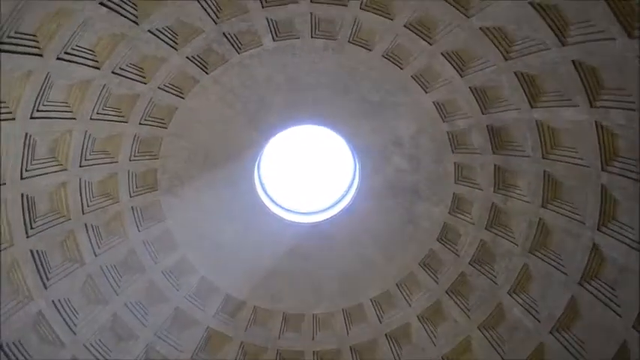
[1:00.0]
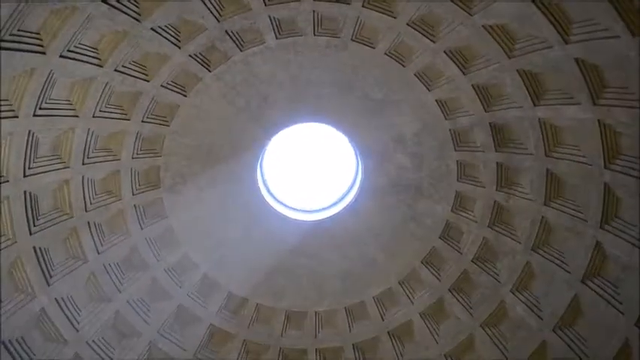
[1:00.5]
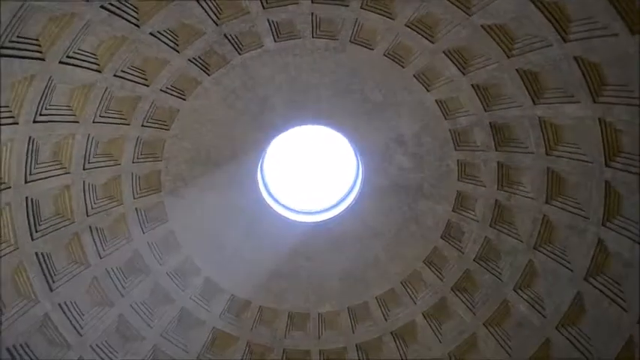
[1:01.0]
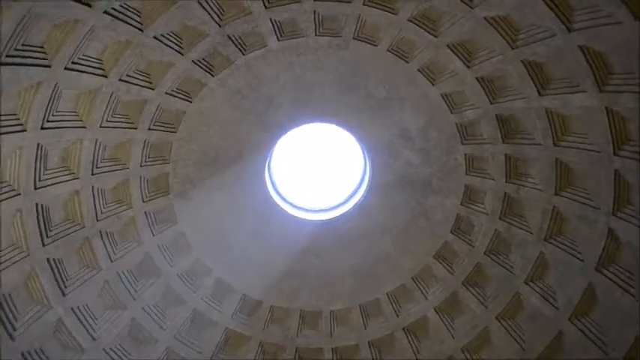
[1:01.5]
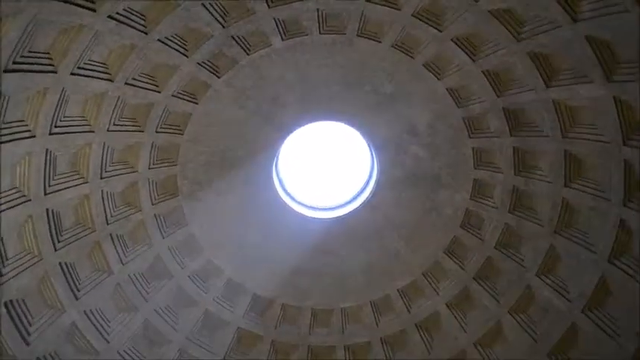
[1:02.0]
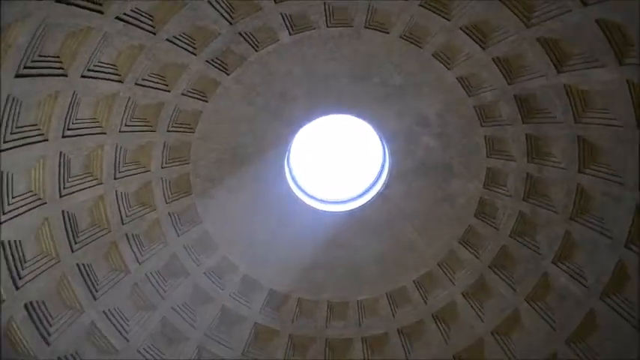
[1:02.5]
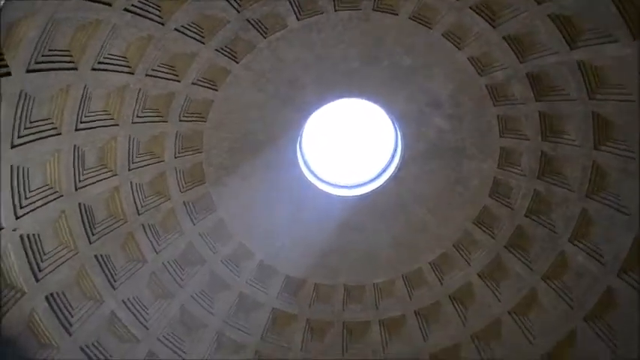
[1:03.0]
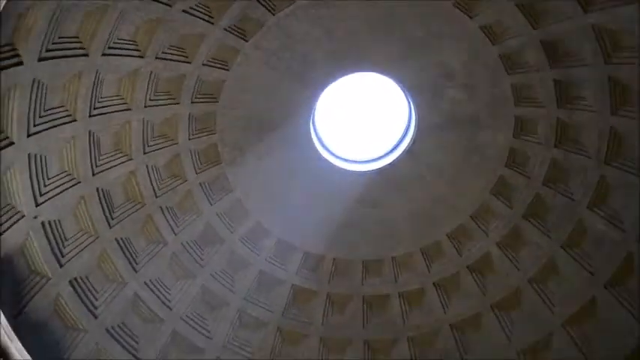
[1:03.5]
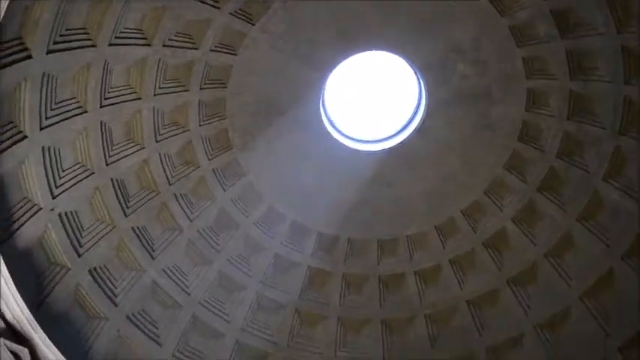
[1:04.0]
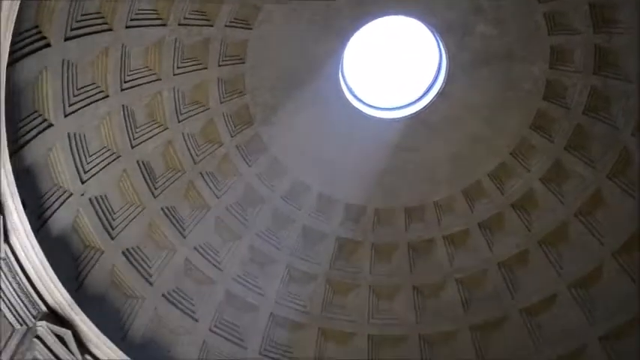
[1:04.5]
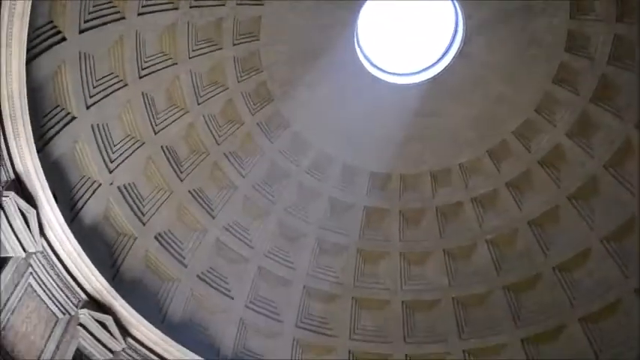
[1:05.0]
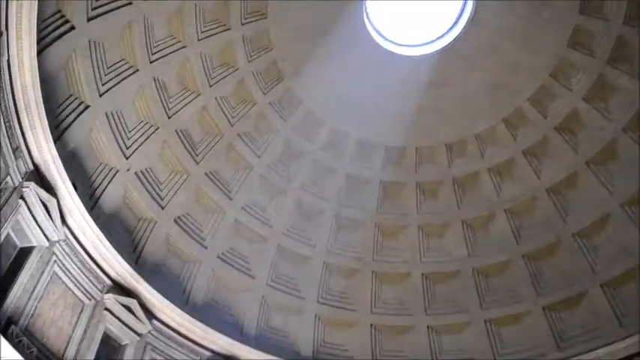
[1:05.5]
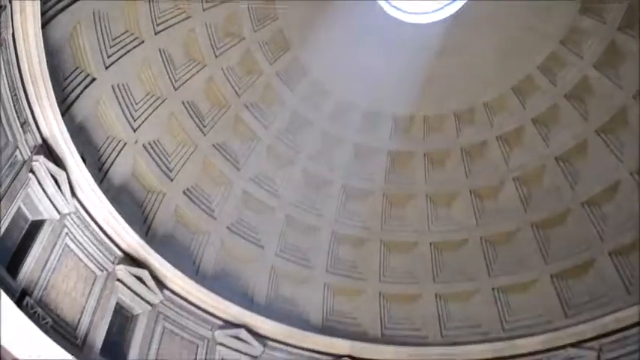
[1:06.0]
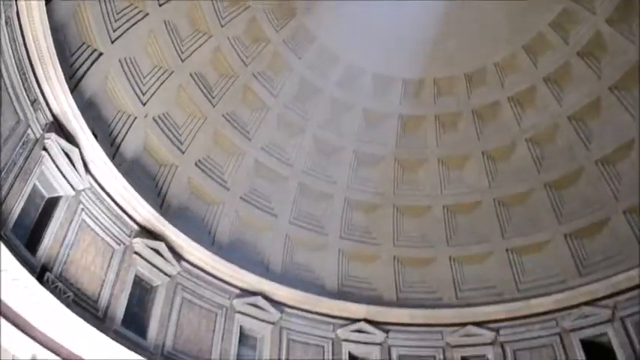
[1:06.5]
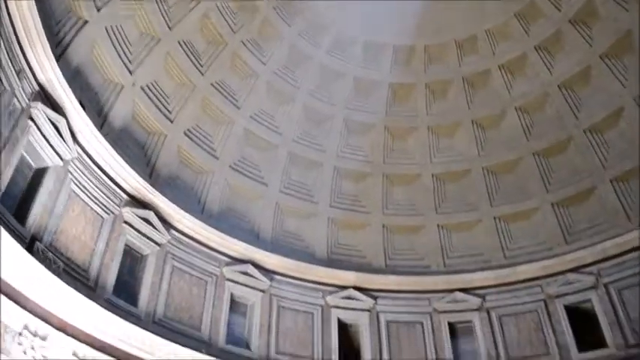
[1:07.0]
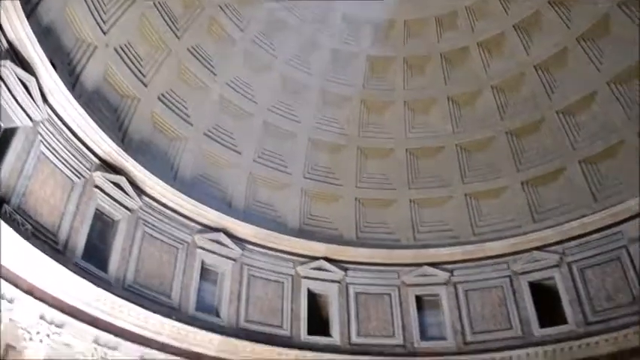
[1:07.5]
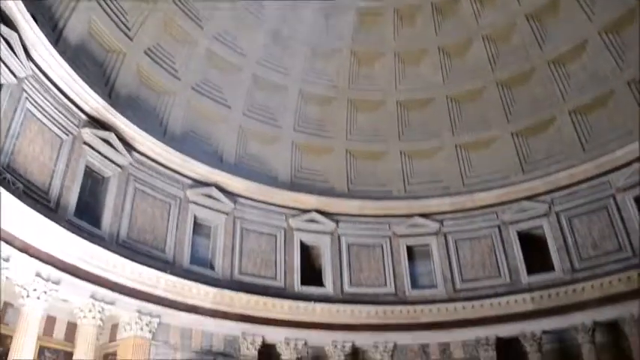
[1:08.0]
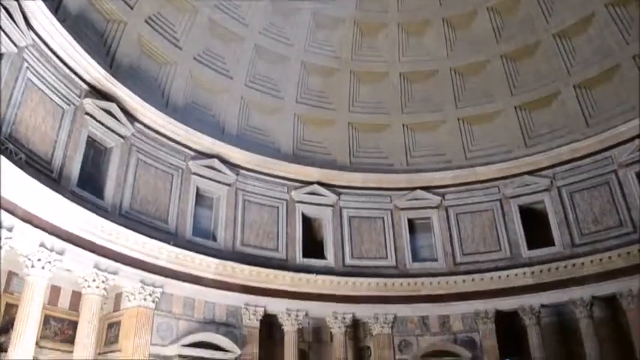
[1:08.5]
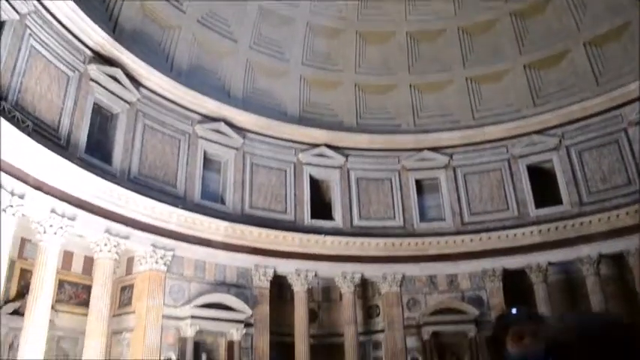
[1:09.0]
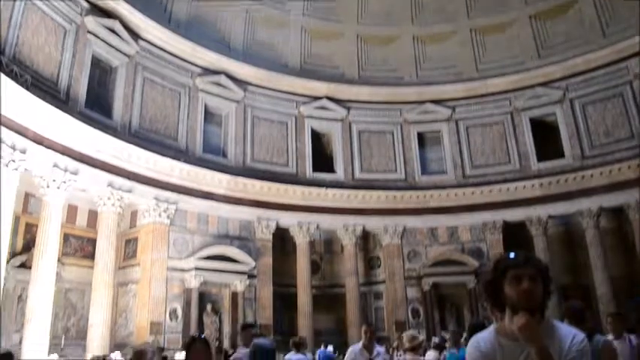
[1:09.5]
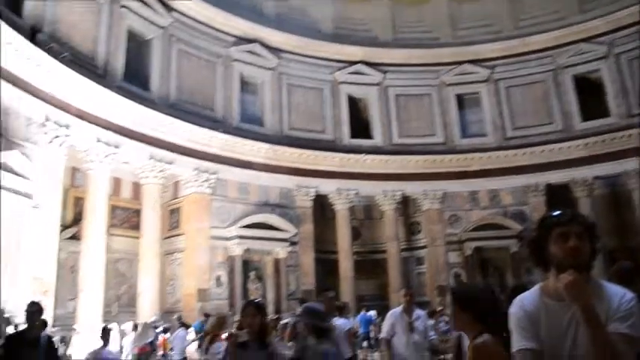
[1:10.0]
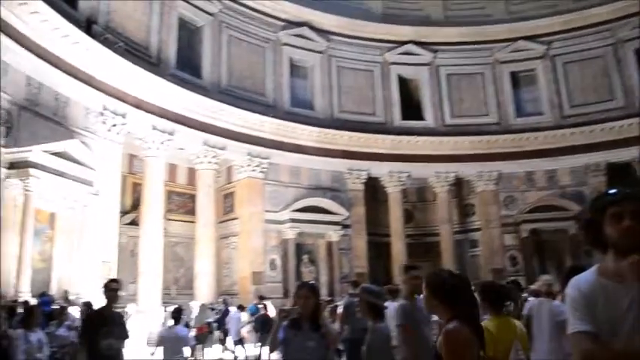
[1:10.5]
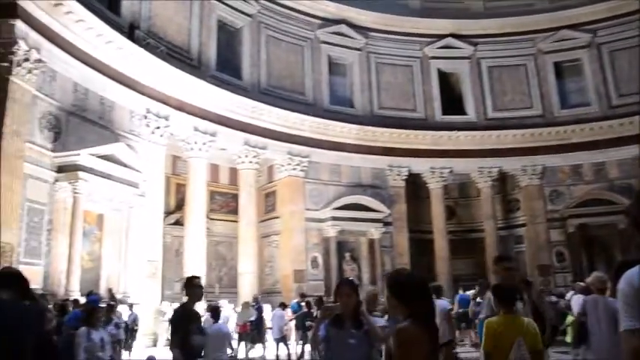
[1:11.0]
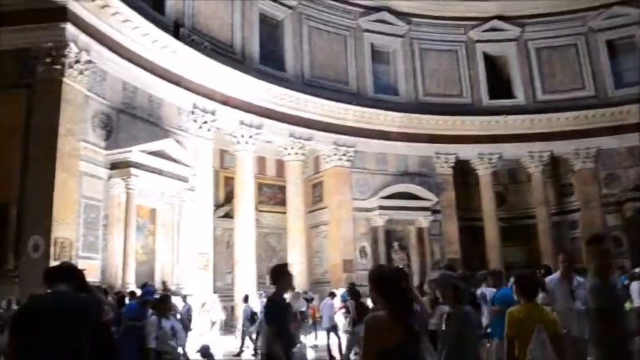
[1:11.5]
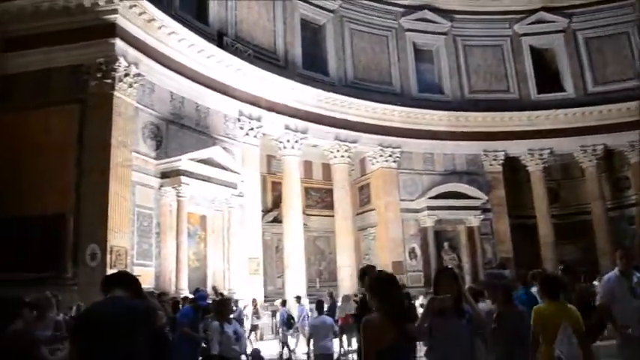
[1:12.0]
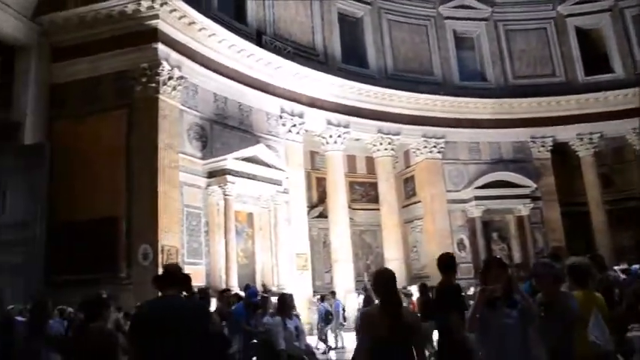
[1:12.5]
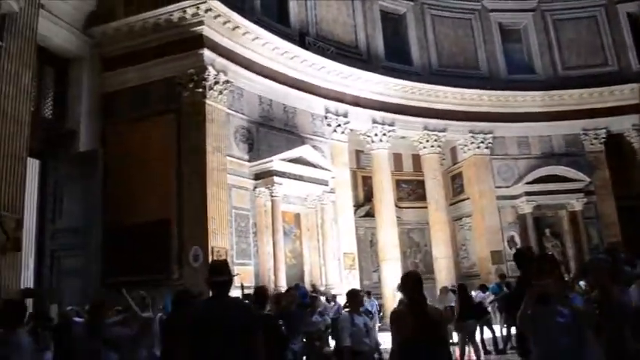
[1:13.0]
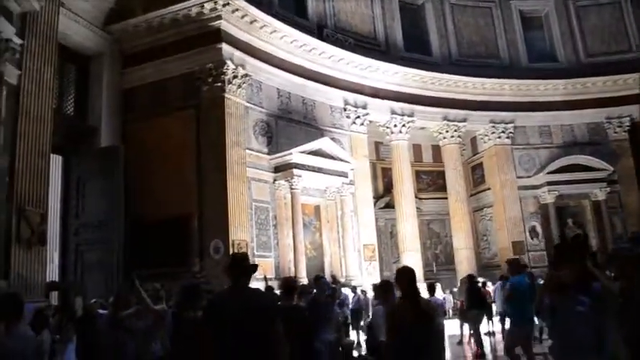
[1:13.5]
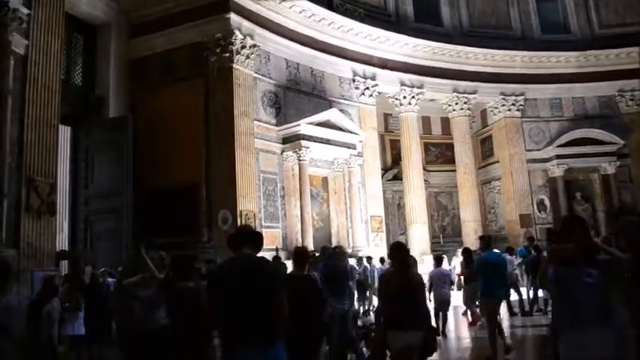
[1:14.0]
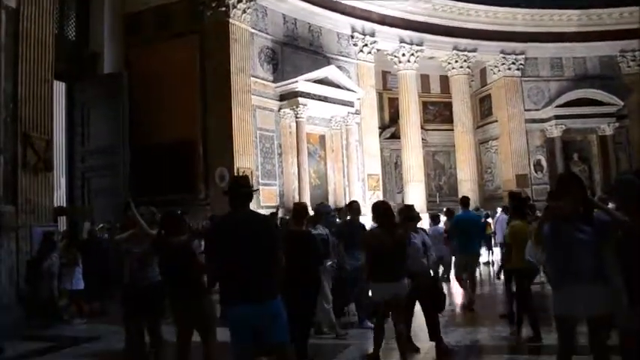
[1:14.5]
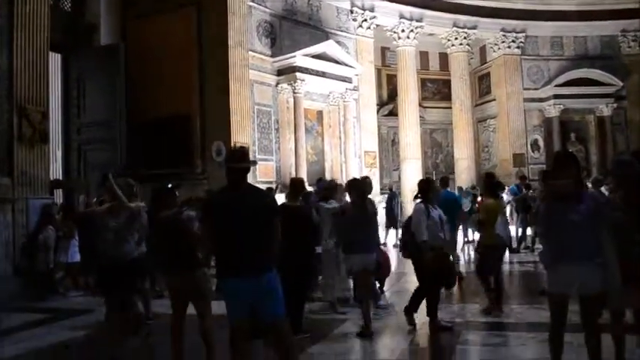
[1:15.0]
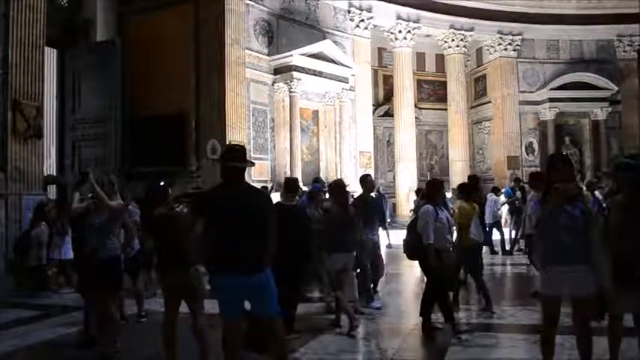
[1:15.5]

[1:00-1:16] A circular beam of light shines through the very center of the ceiling inside the building. The camera eventually makes its way back downward from the center of the ceiling and captures more of the lower half of the building. People walk everywhere in different directions, and someone is on their cell phone. There are lots of designs within the walls, and pillars, and the building visibly has a couple of levels, all in an older style of architecture. The ground appears to be gray; it is the last thing shown as the camera returns all the way to a level, first-person perspective.